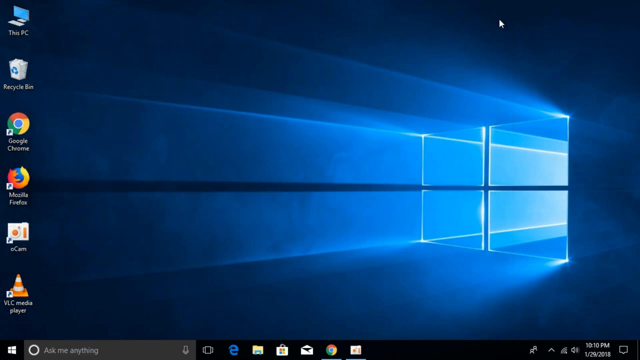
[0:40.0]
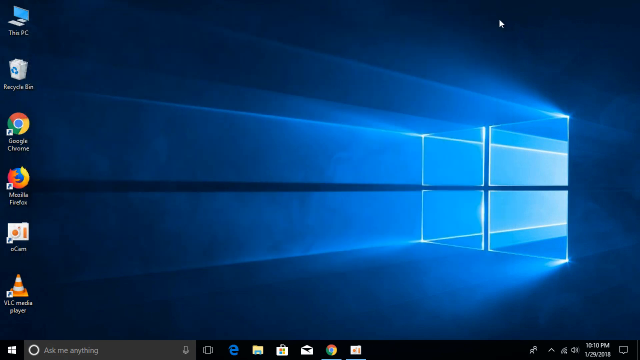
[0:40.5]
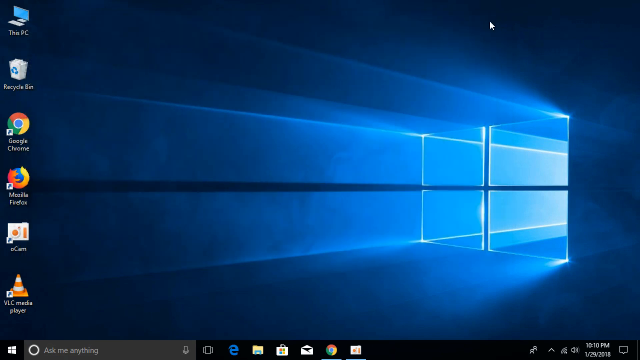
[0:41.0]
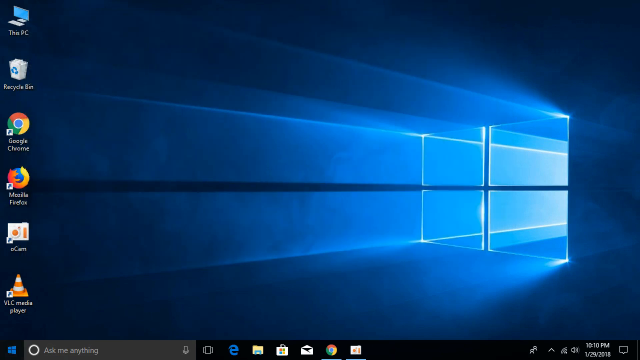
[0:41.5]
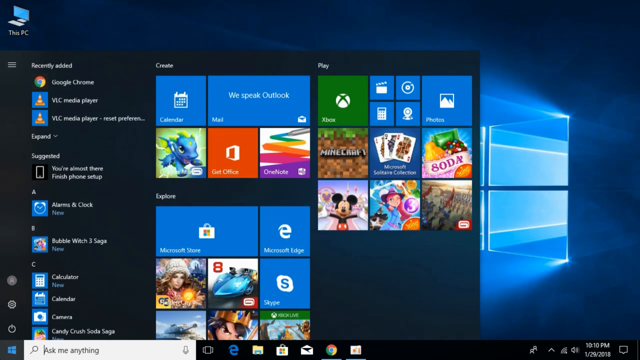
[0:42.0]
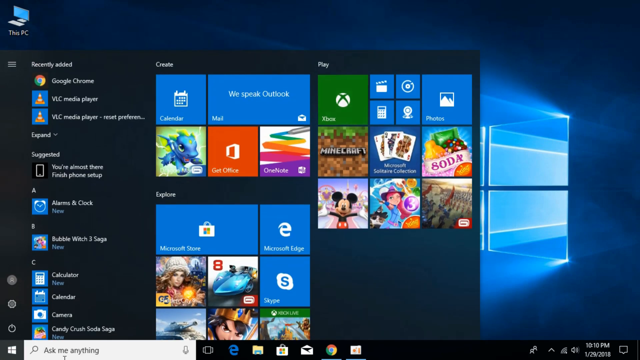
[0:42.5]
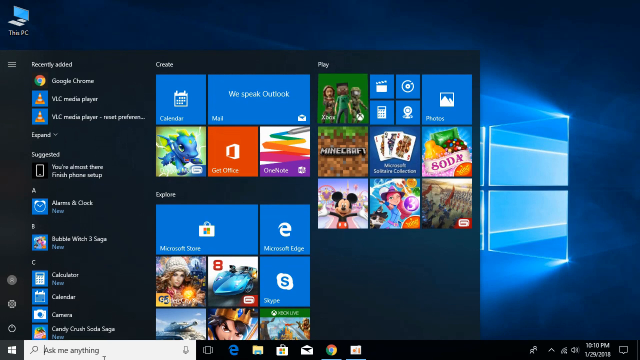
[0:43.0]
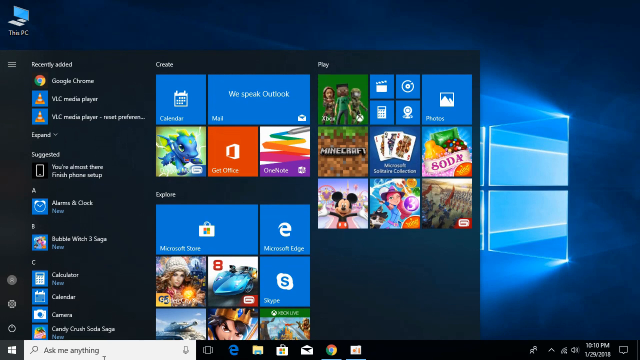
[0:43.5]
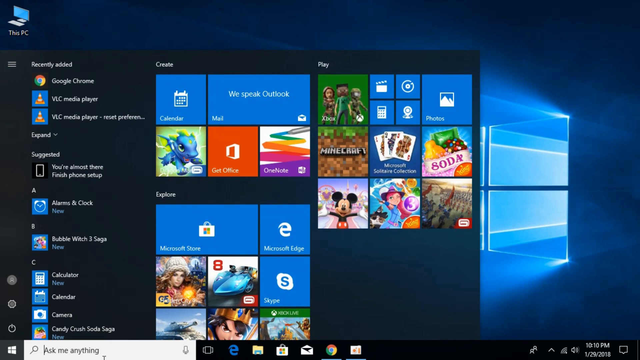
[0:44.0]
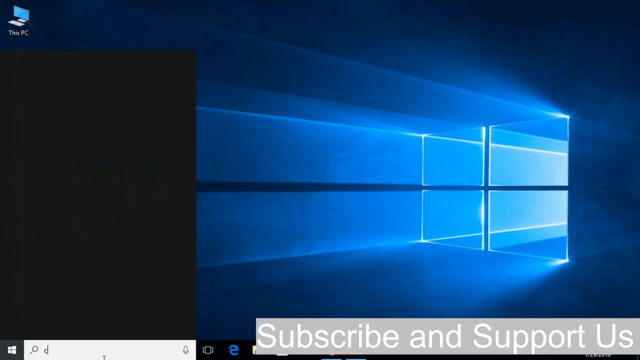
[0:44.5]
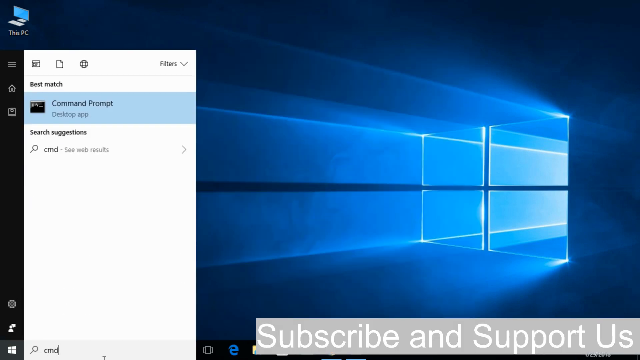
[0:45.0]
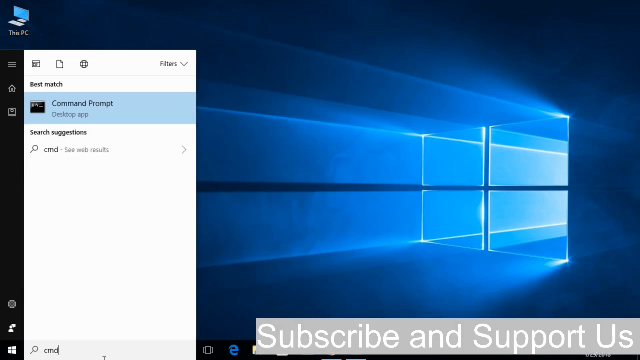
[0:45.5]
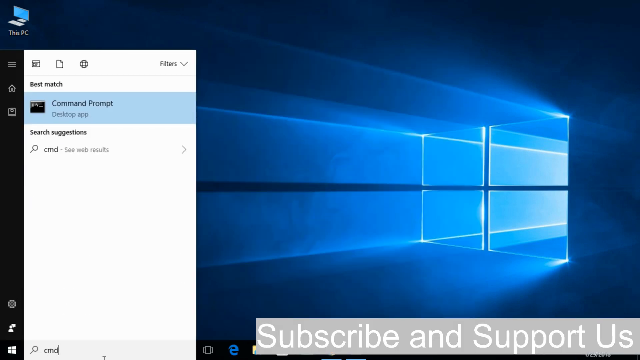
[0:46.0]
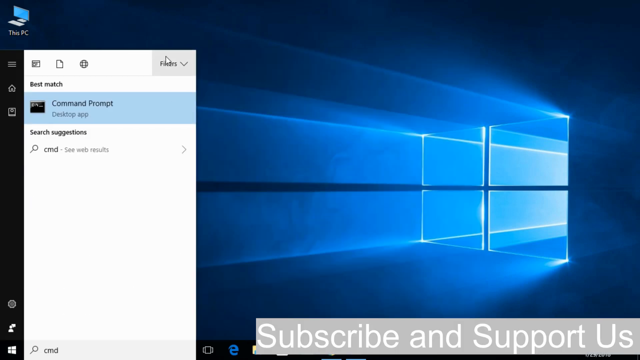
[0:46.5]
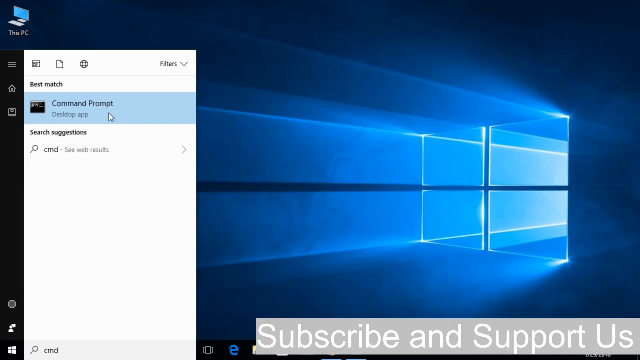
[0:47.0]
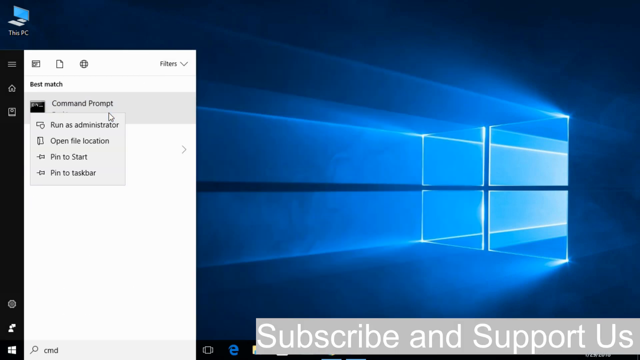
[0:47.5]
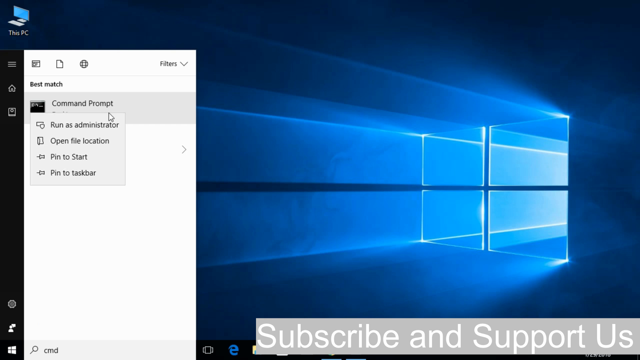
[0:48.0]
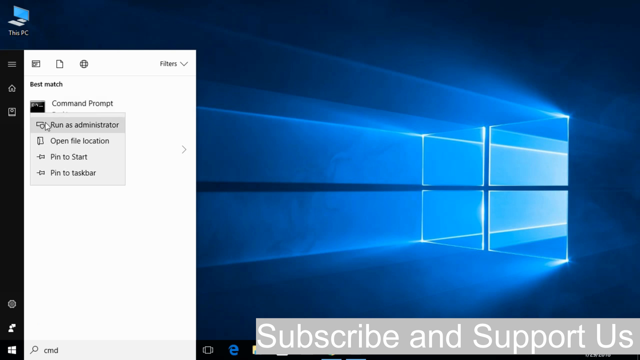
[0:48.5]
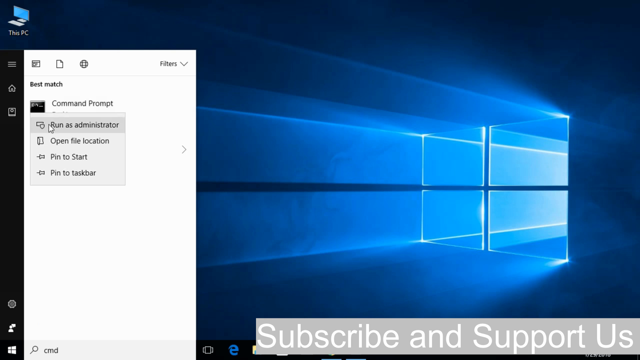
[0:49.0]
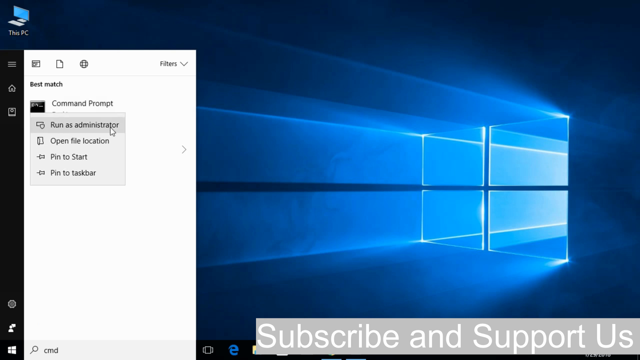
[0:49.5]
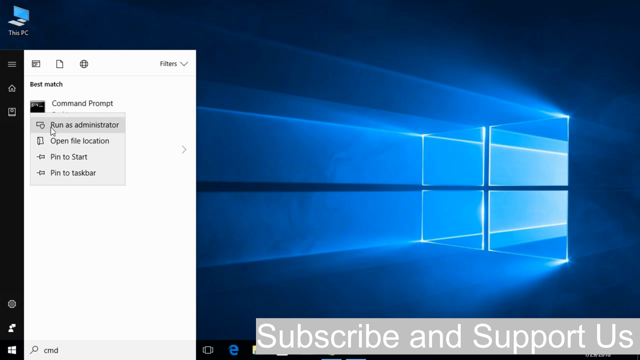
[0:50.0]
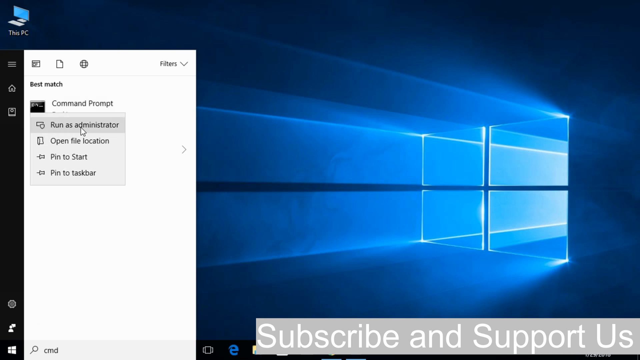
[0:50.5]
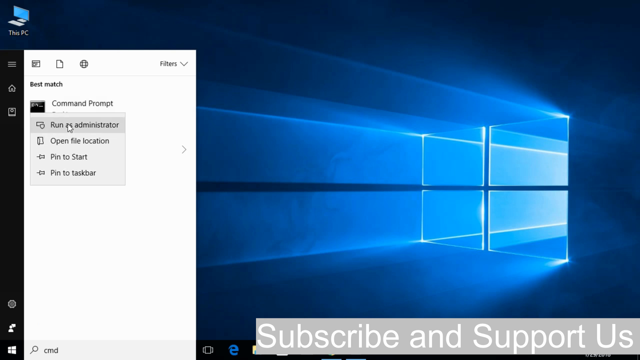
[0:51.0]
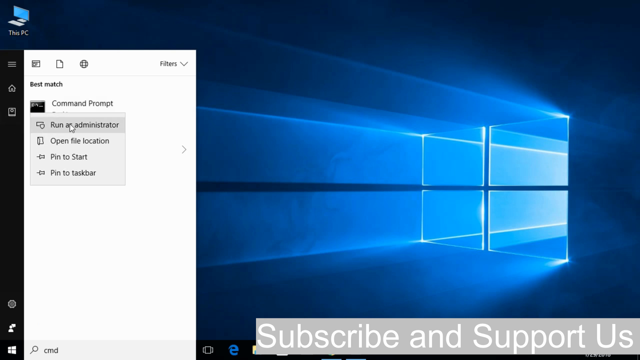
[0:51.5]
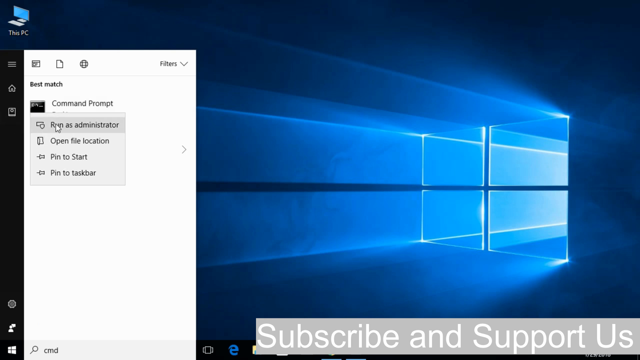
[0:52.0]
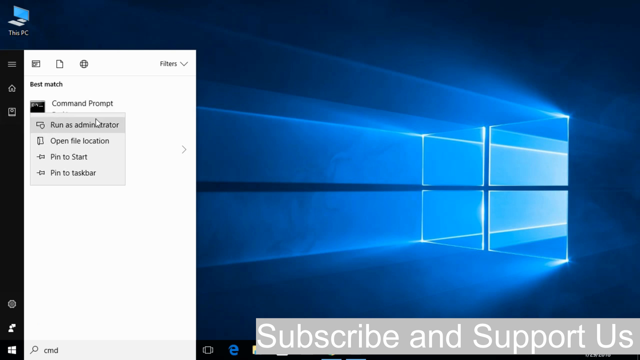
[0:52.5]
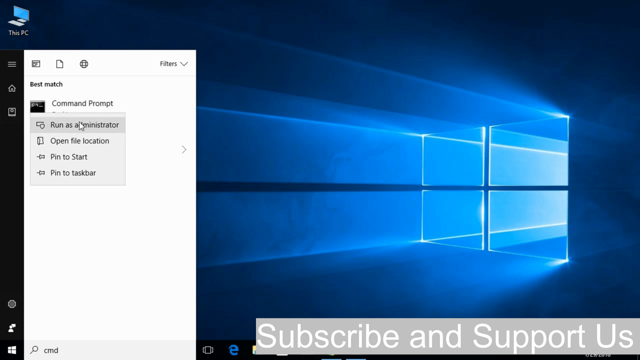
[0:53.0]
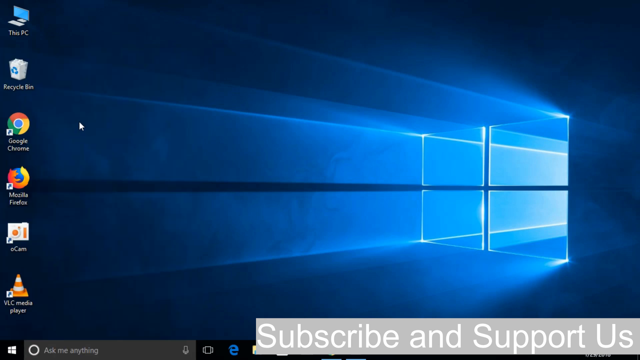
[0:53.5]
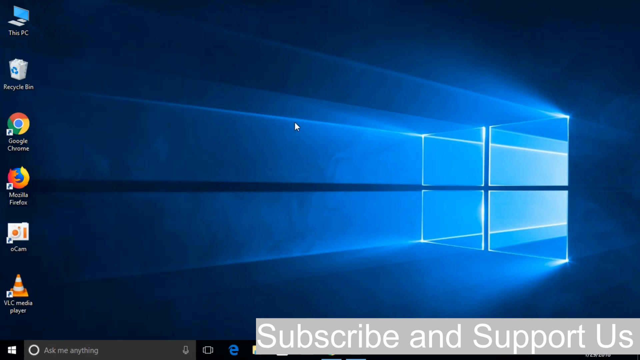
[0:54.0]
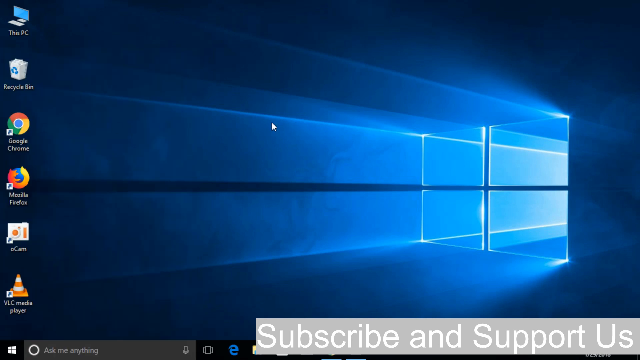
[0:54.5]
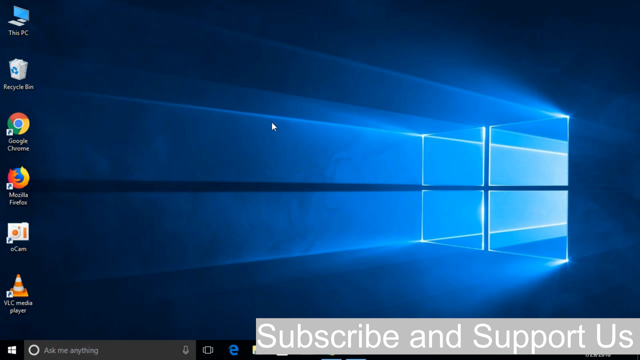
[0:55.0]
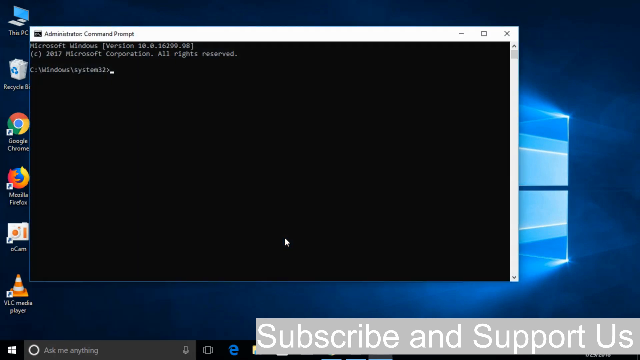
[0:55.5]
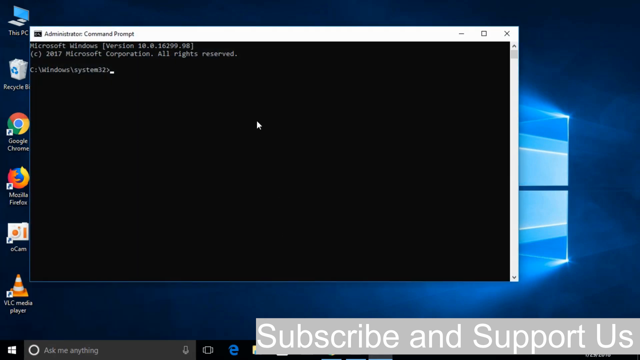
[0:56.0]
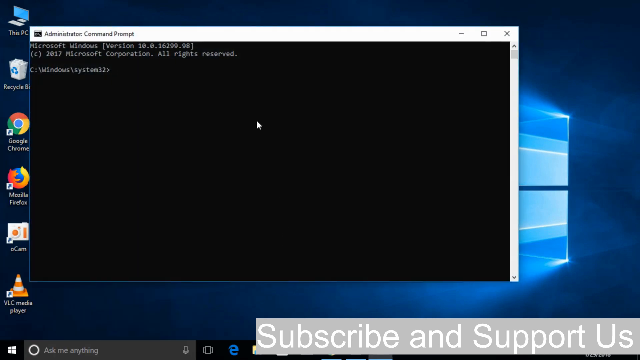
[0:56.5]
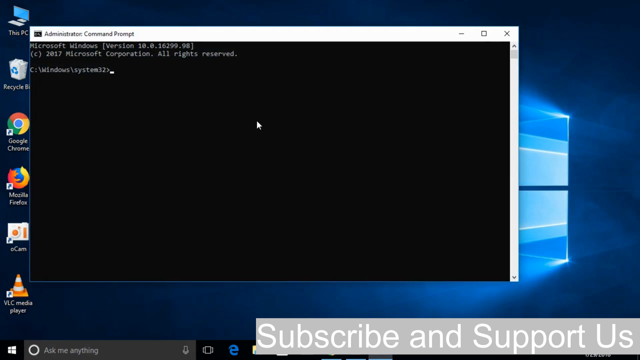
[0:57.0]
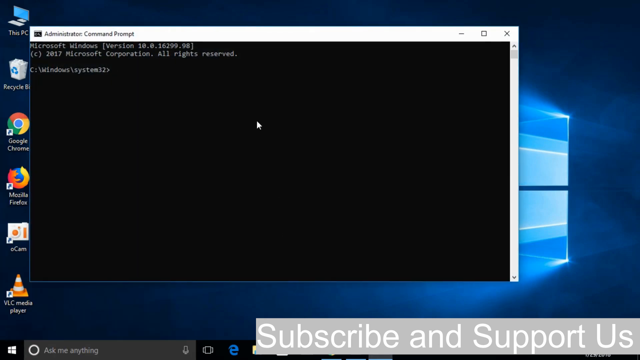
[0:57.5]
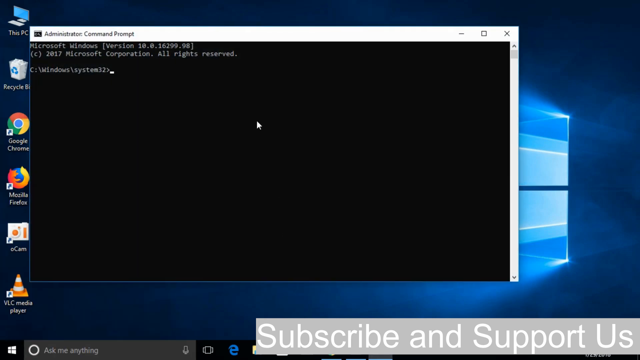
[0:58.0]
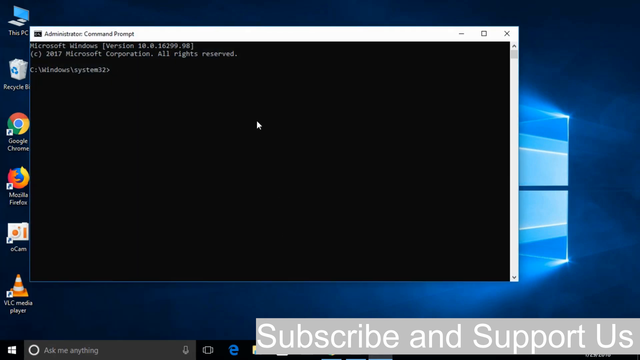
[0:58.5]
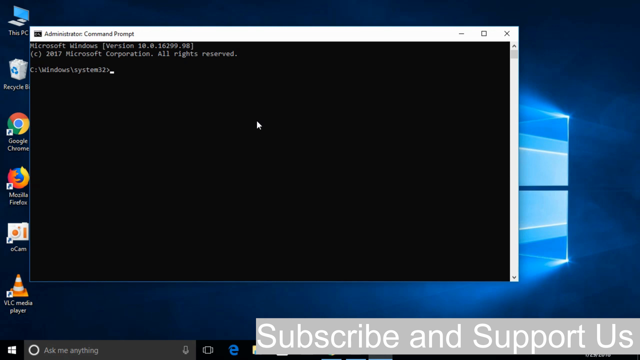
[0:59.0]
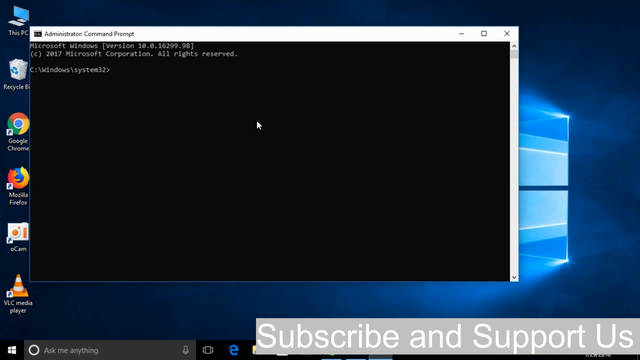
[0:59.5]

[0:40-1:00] Text asks viewers to "subscribe and support us." A light is shown.